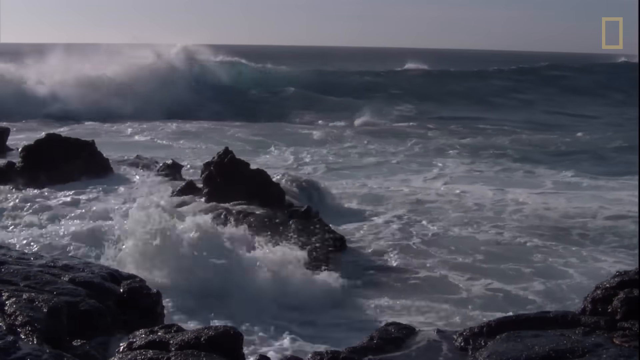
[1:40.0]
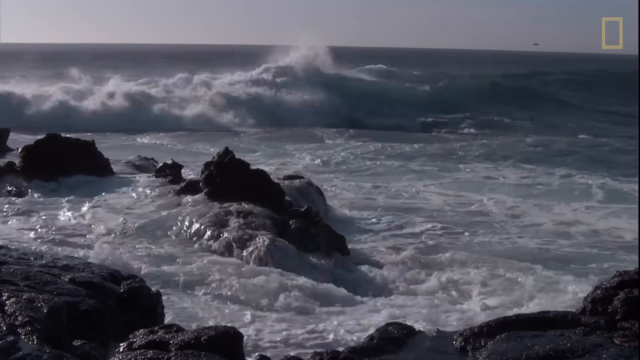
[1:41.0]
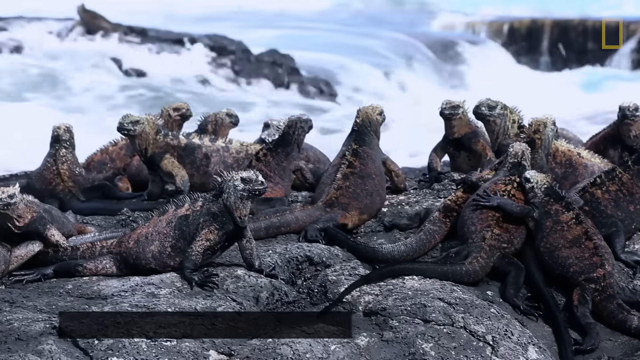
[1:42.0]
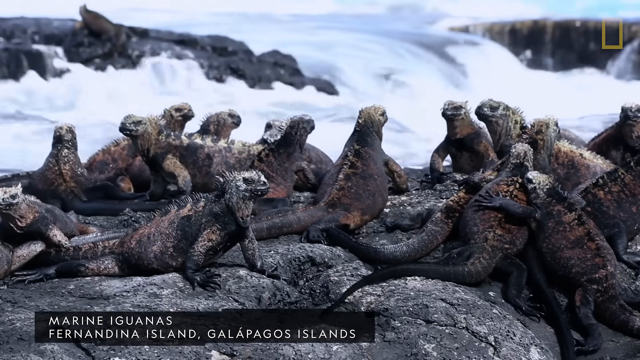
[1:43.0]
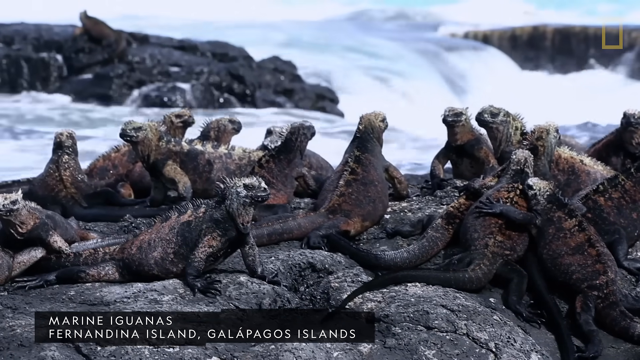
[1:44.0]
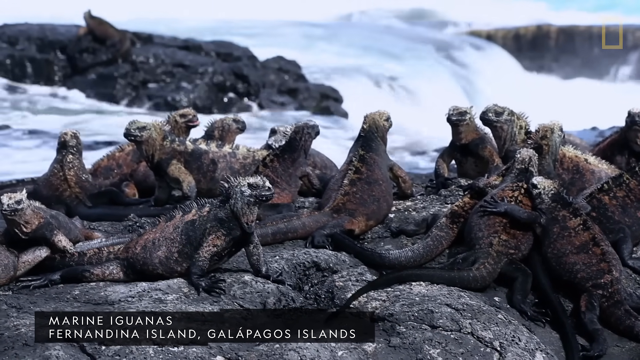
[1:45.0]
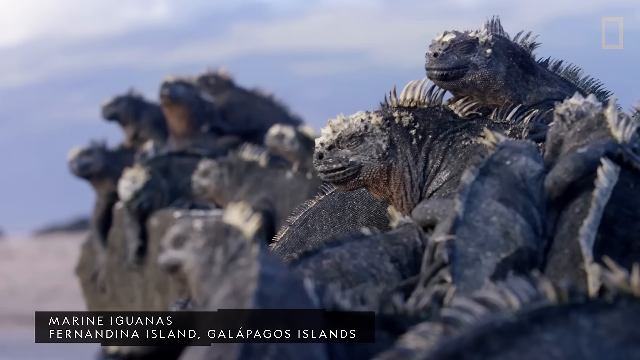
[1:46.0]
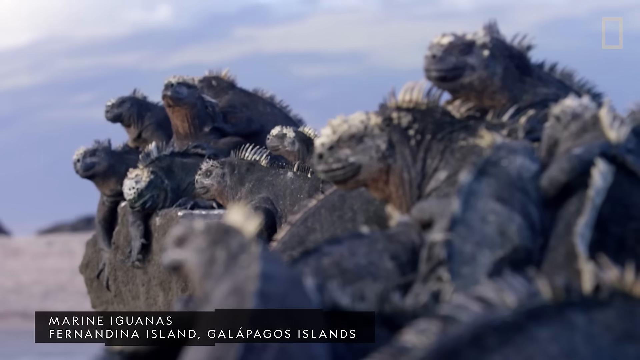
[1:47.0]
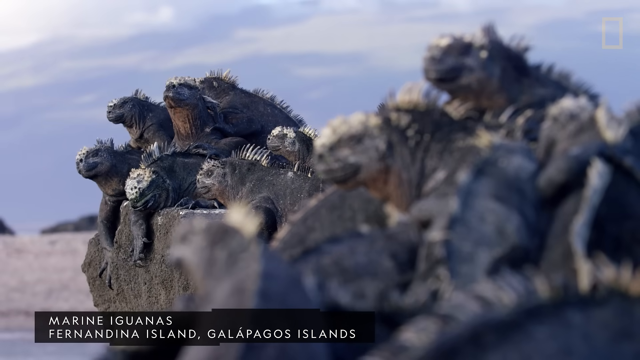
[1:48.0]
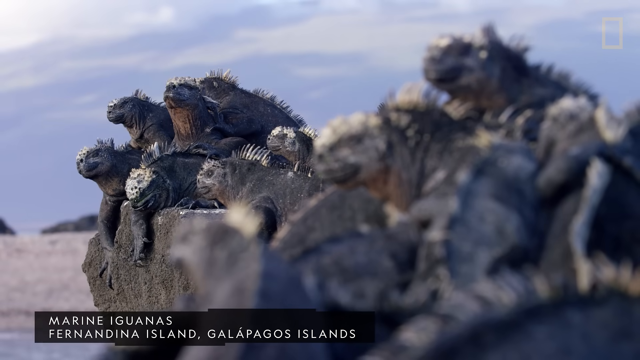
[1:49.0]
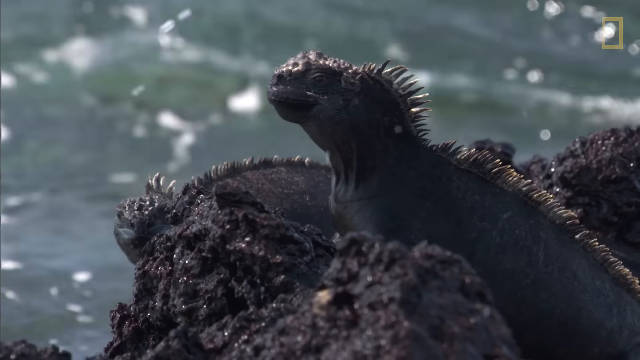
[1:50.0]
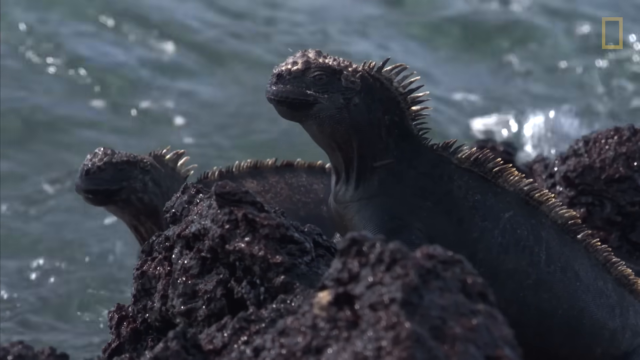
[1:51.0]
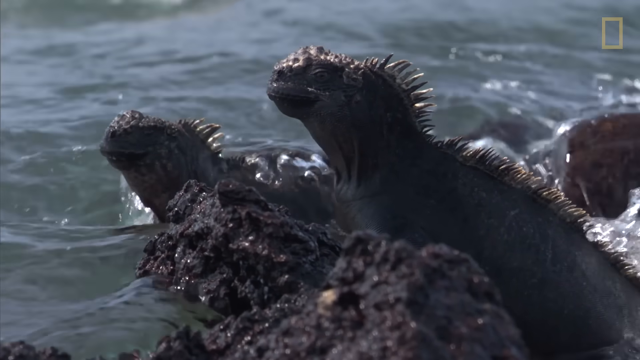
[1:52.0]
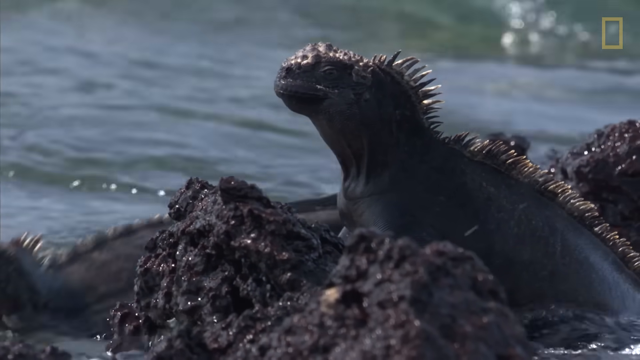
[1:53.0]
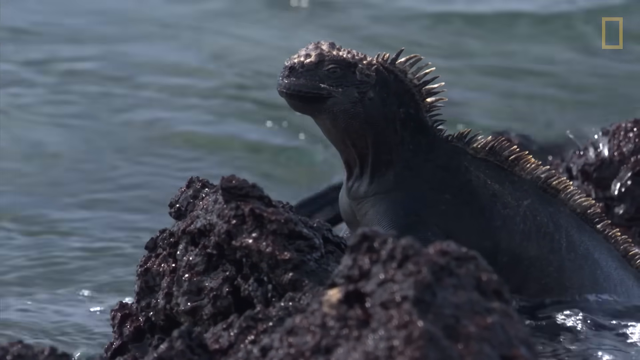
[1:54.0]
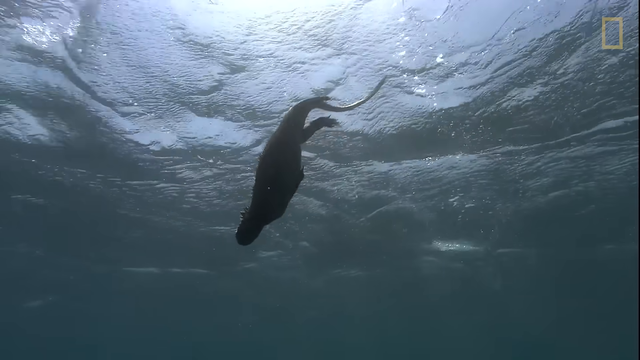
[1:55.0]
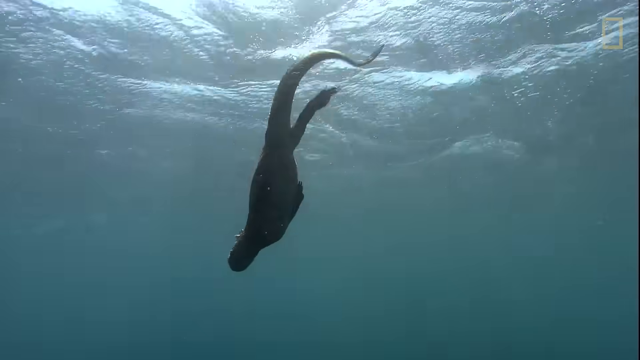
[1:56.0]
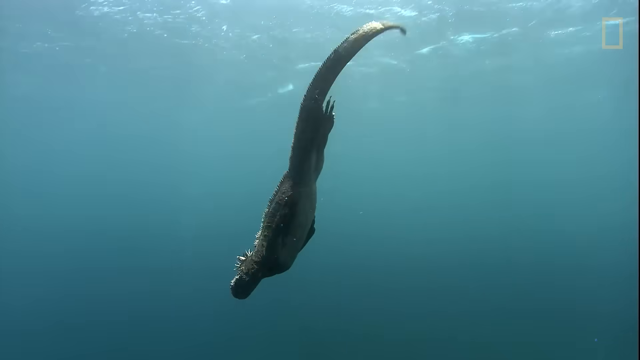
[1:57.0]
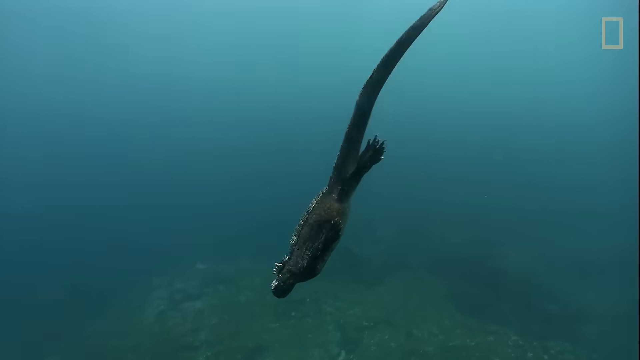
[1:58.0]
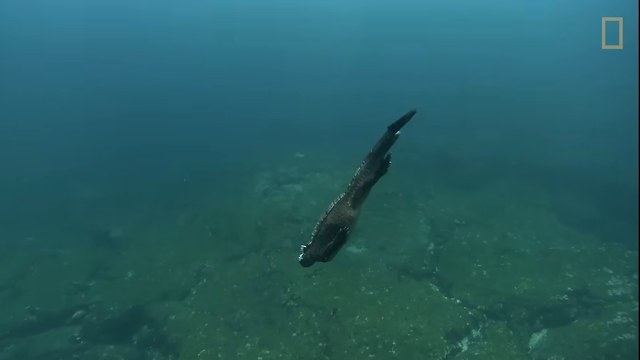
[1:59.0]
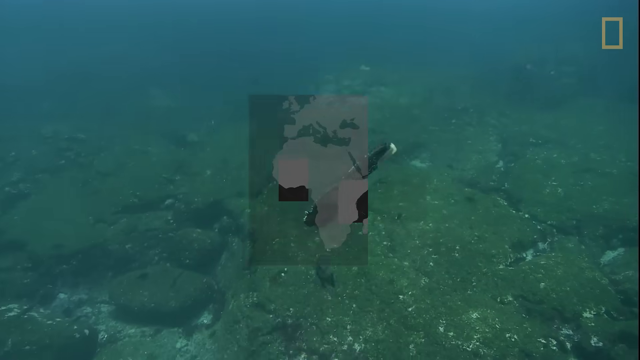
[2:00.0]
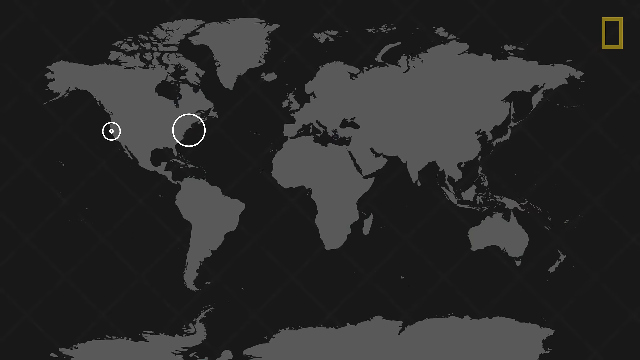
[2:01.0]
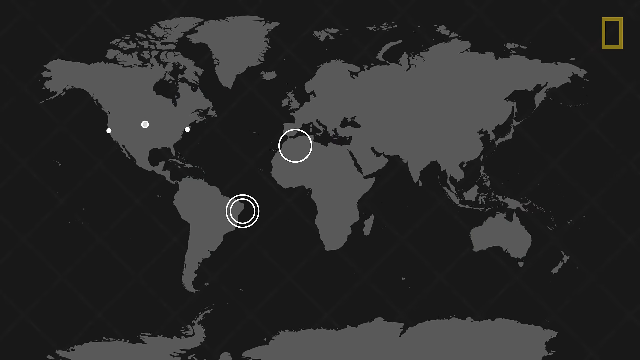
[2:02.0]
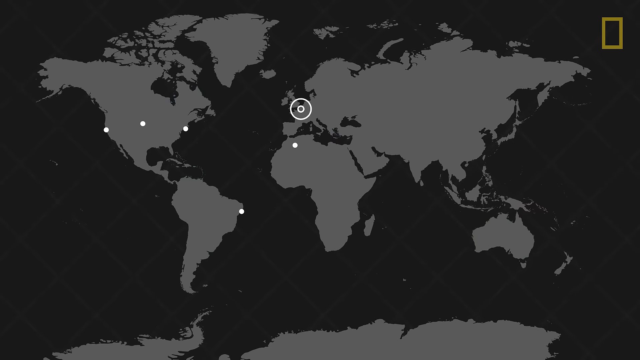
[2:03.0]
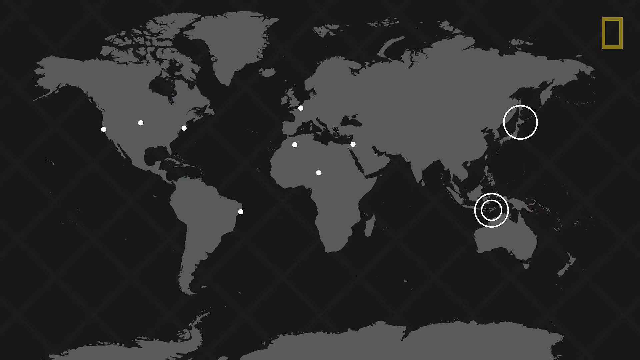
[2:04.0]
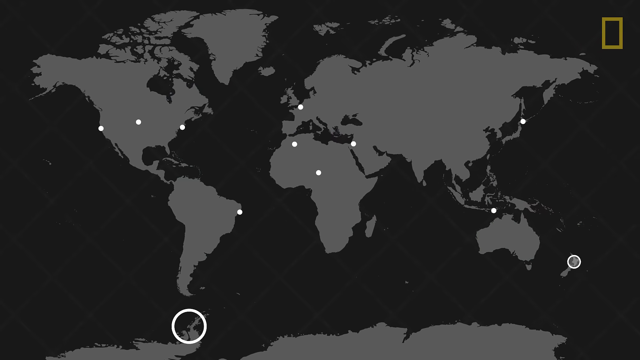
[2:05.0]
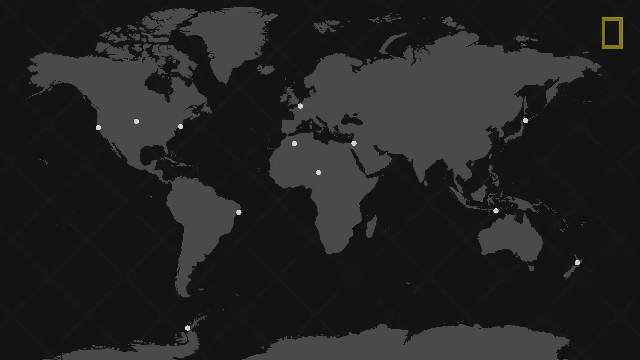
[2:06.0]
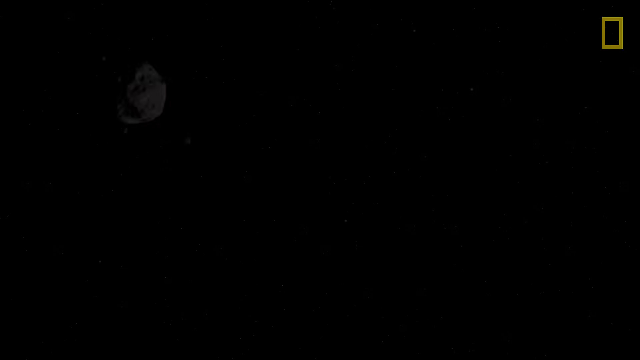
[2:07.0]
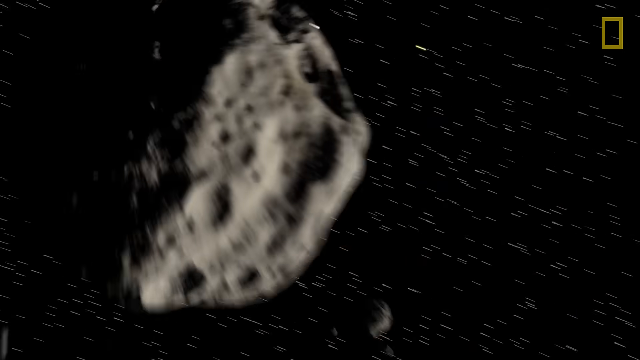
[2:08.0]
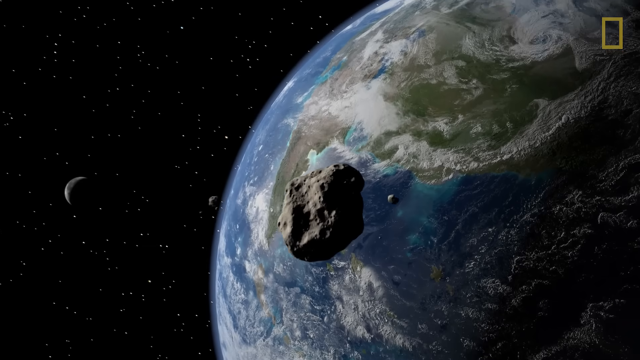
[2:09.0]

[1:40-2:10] Ocean waves wash onto a beach. Many animals appear, seemingly smaller than the larger one shown before, and they swim fast. After that come pictures from space, seemingly taken from outside the planet.